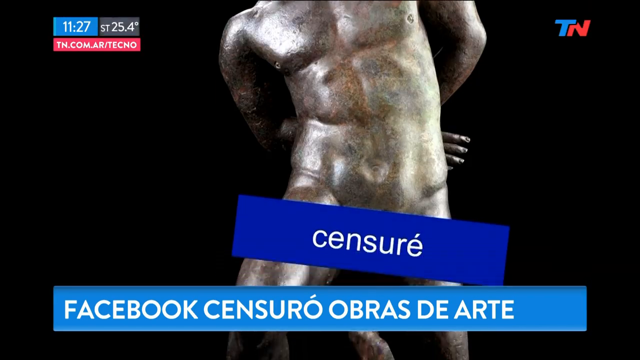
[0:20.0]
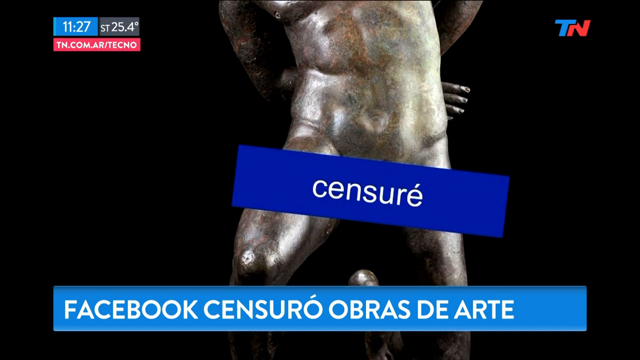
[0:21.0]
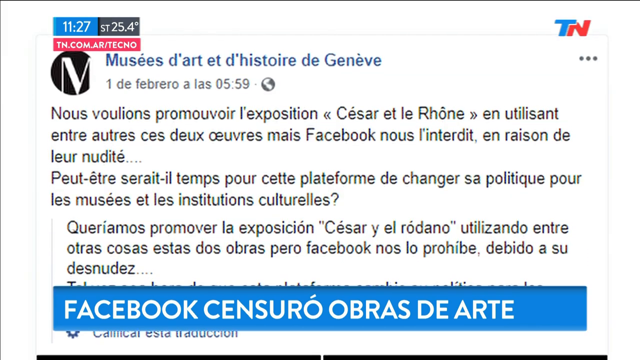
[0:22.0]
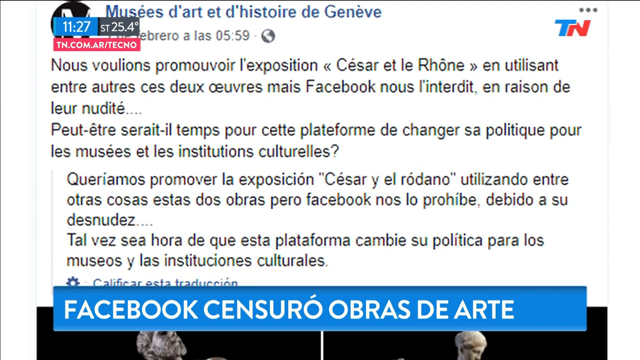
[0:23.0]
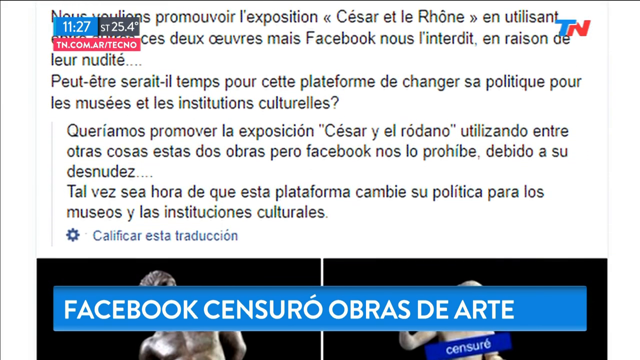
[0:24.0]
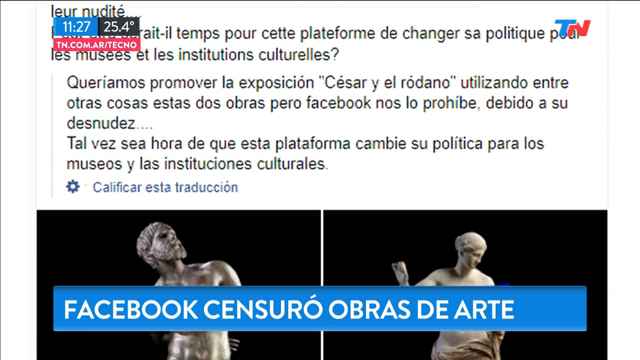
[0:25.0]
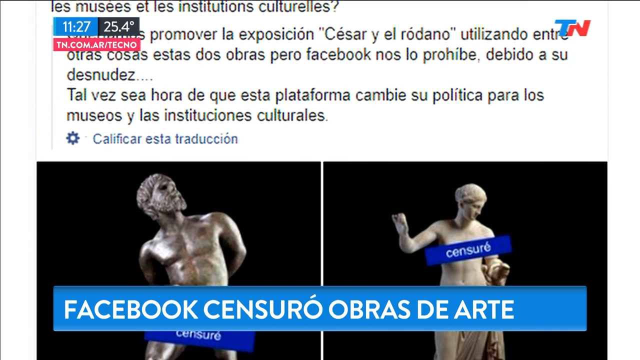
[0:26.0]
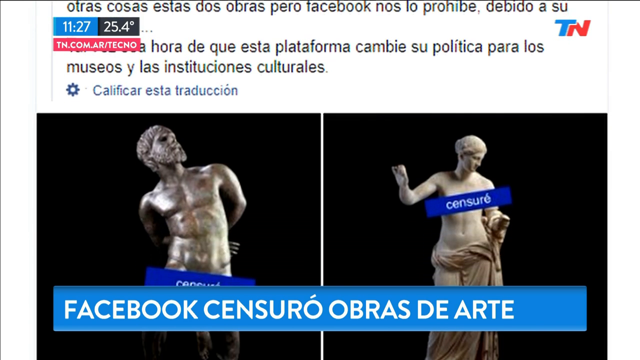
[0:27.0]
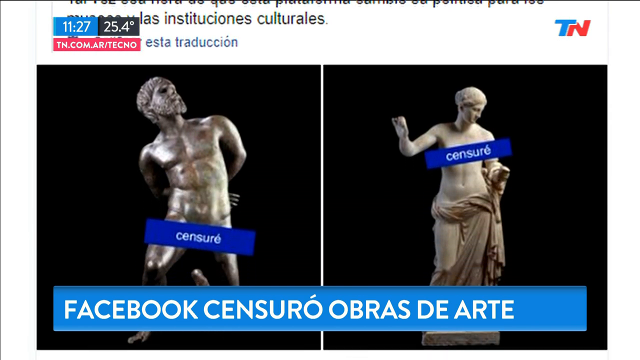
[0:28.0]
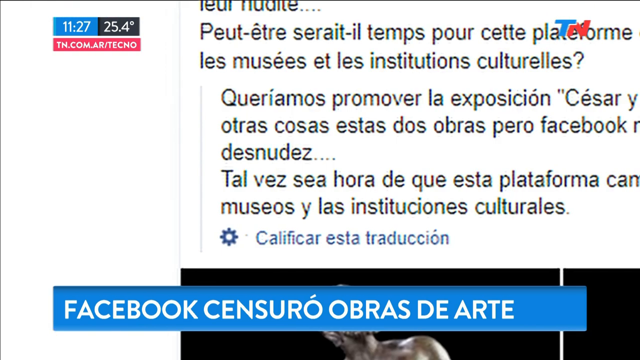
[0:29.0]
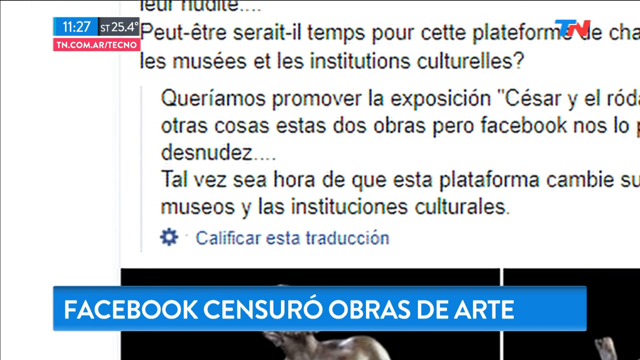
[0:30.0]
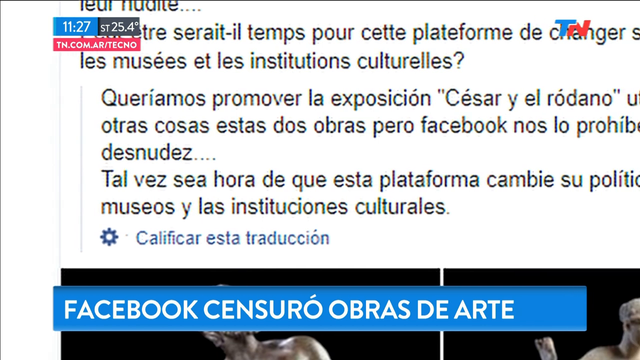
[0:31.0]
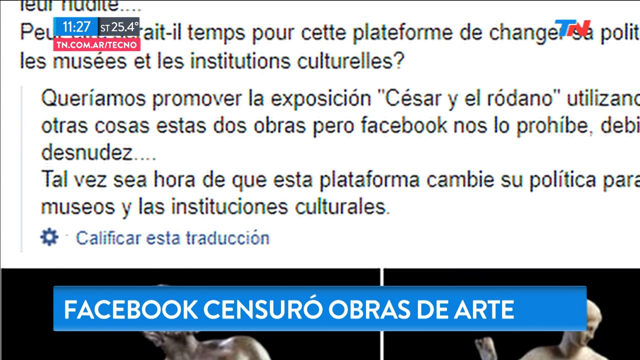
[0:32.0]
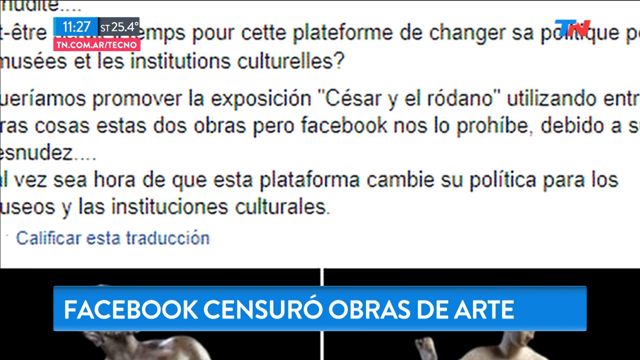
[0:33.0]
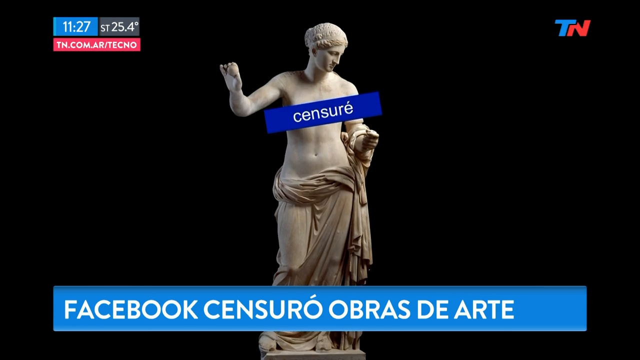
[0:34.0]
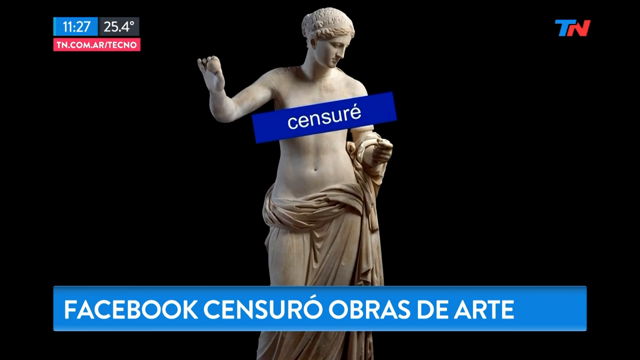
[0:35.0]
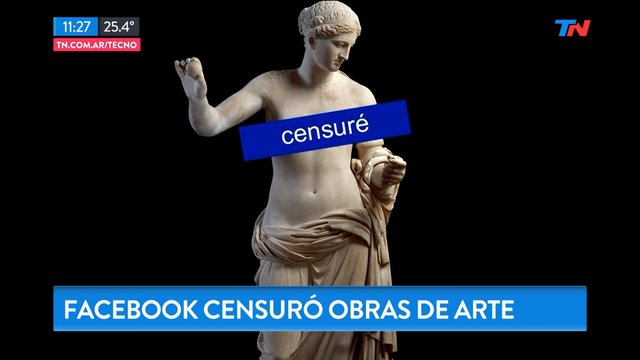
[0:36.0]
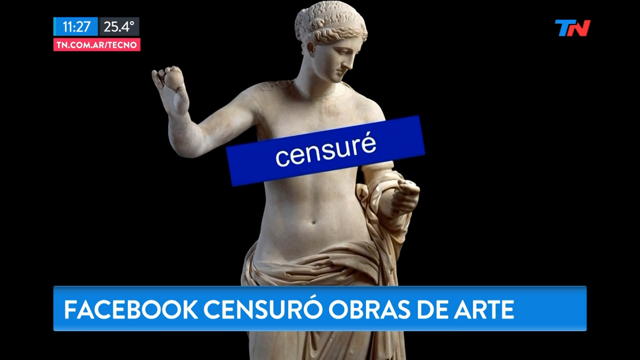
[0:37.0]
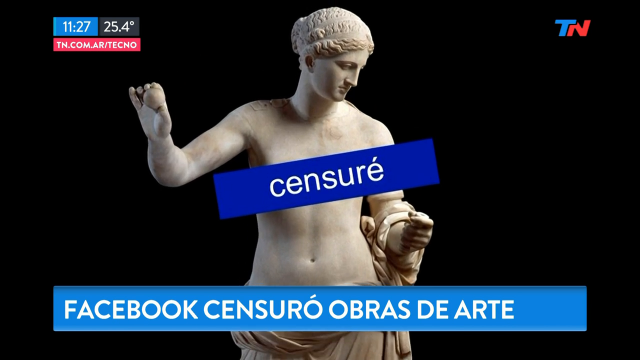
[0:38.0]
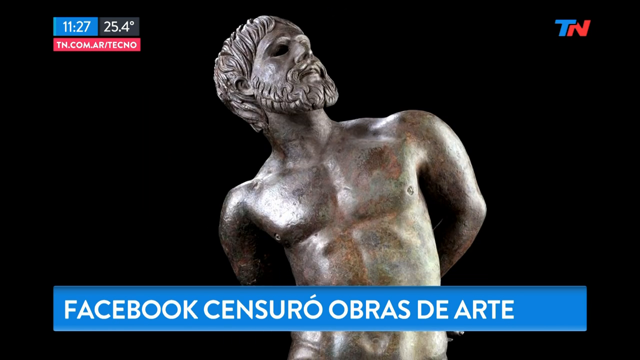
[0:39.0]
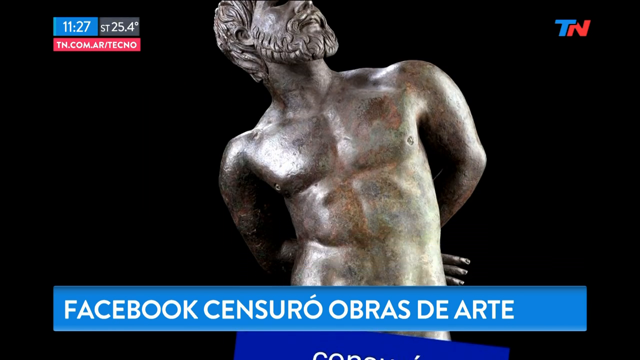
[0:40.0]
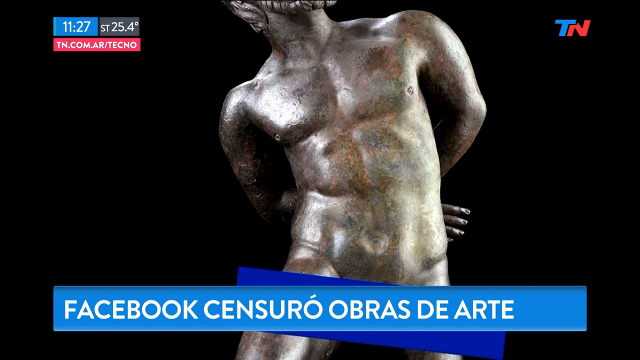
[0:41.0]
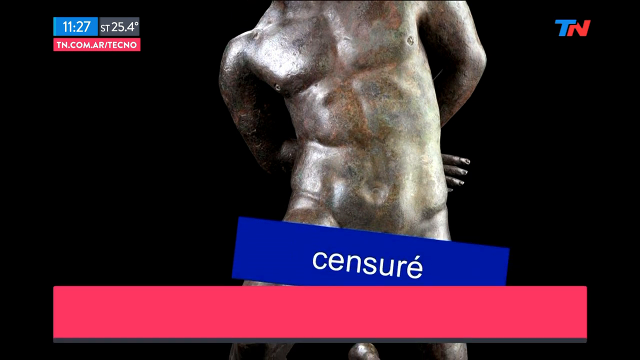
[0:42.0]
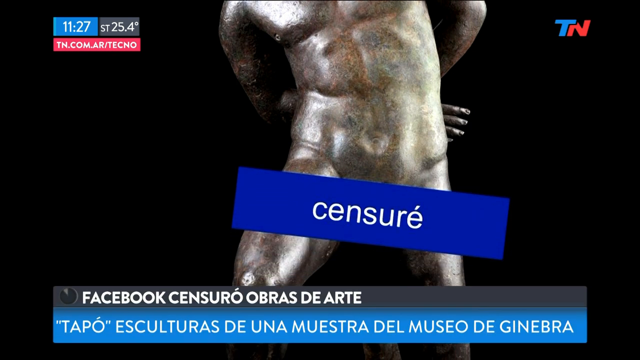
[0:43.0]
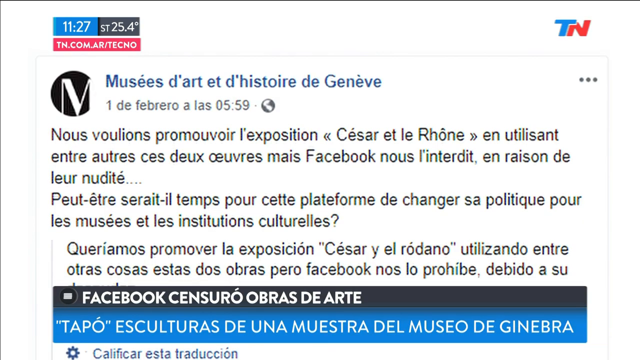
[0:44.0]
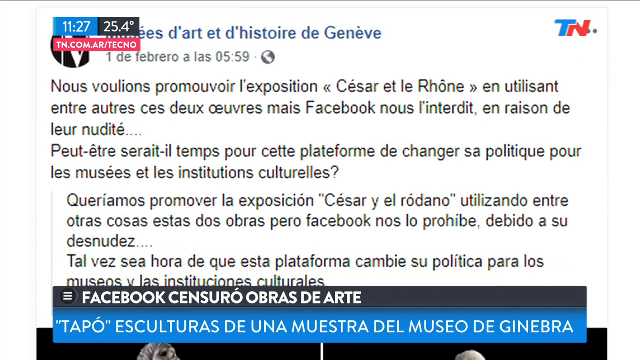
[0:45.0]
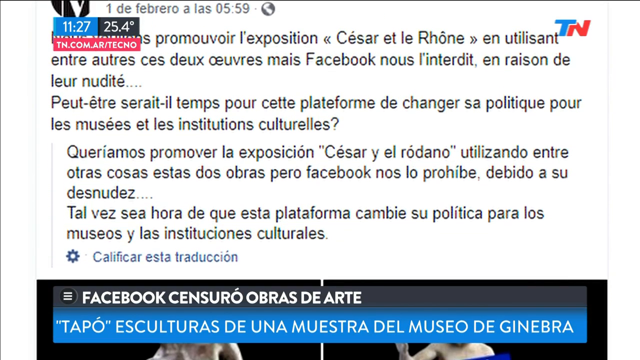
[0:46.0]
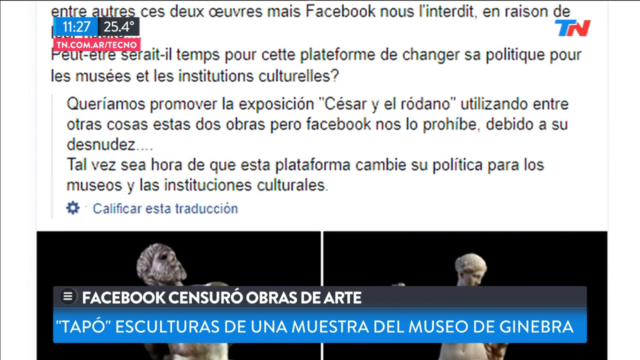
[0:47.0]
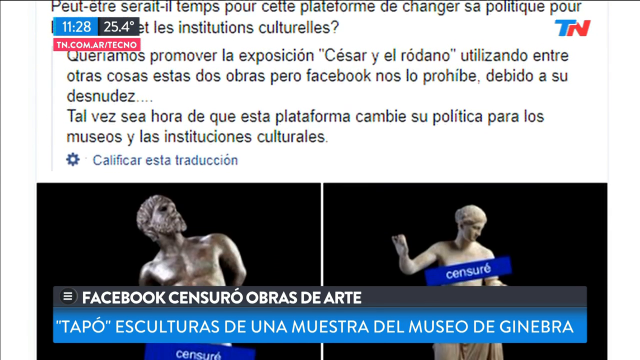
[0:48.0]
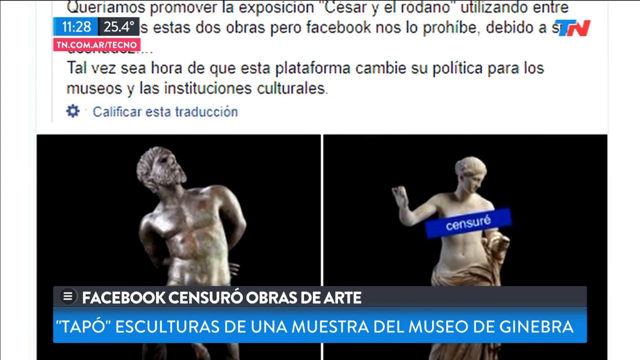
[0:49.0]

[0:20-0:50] The video zooms in to full screen and scans through the whole banner, moving upwards. Pictures of portraits, maybe of Asian people, are shown, along with a Facebook handle on the screen. The pictures show statues of people from the past, and the scan moves across these statues.